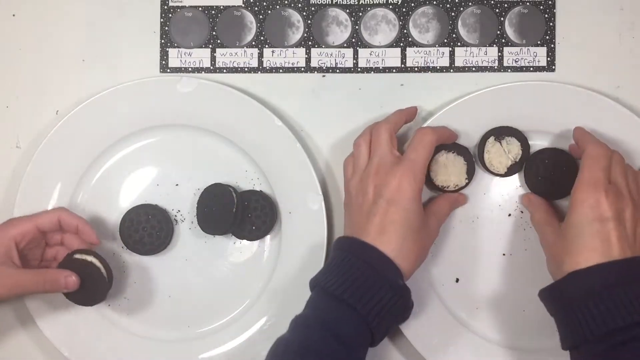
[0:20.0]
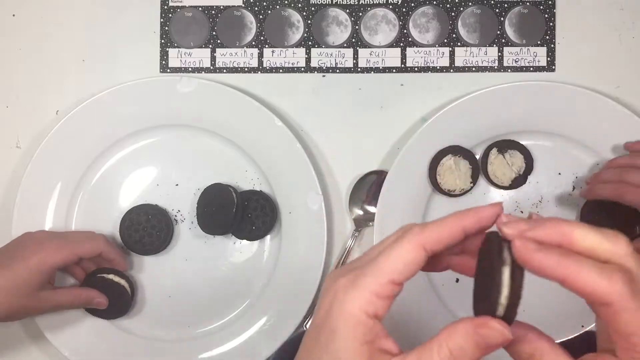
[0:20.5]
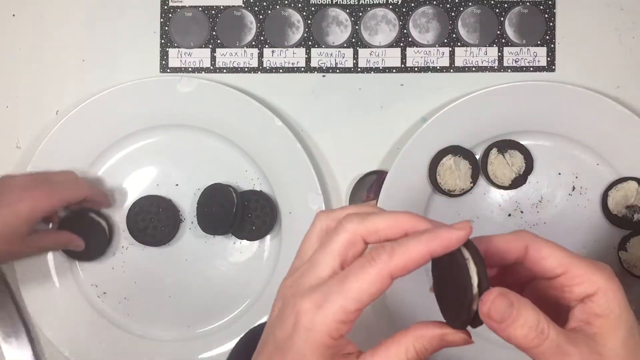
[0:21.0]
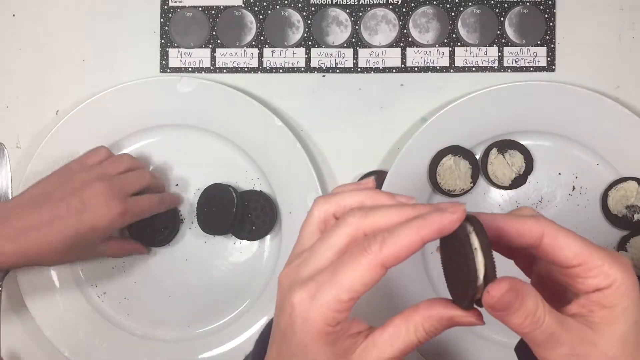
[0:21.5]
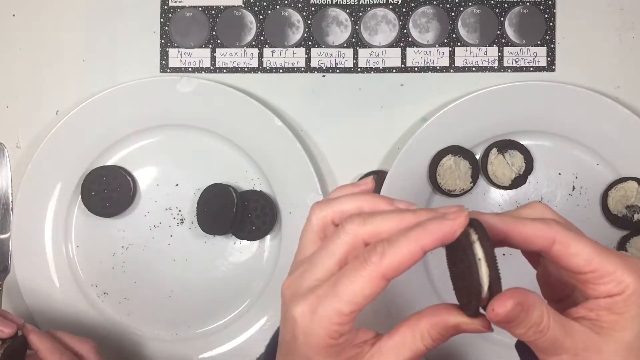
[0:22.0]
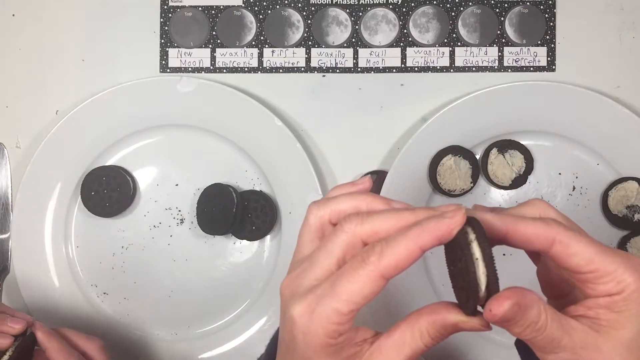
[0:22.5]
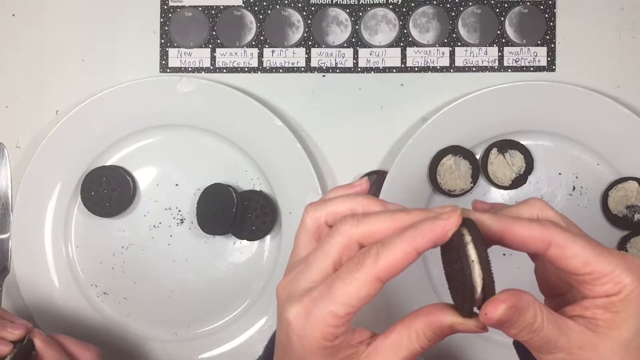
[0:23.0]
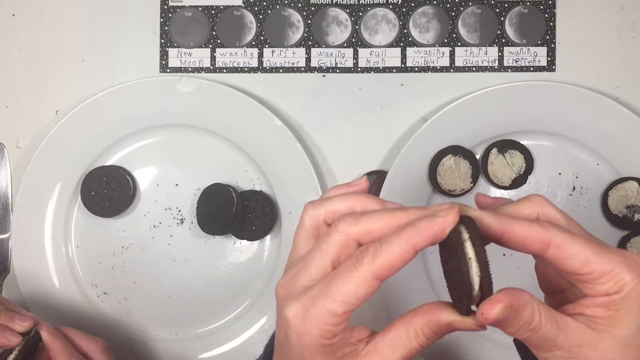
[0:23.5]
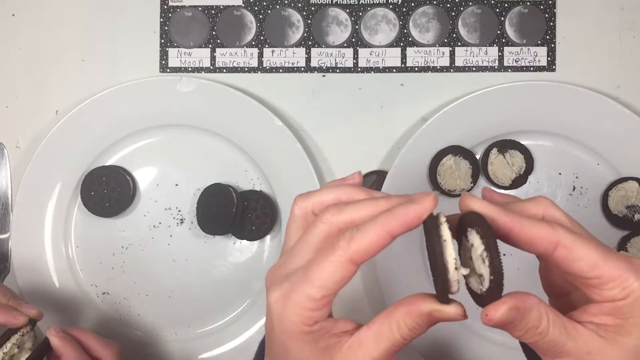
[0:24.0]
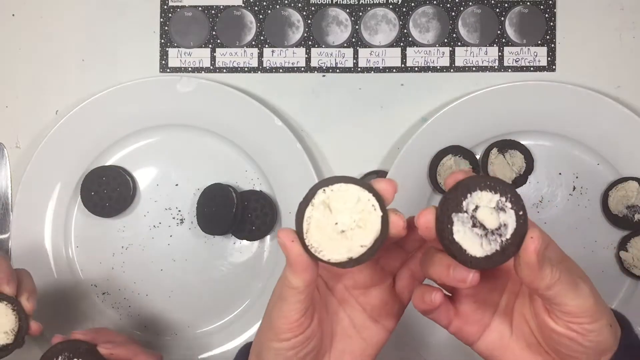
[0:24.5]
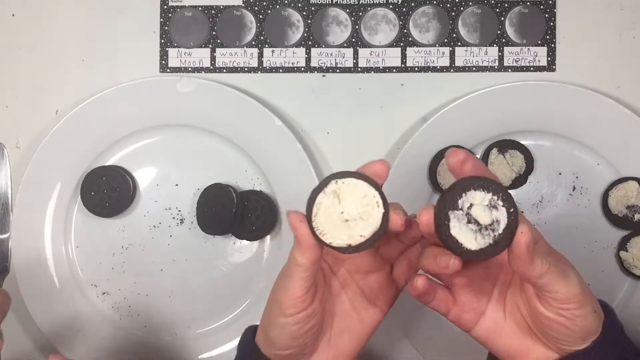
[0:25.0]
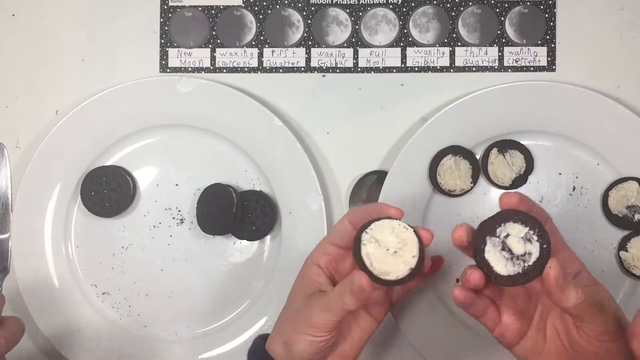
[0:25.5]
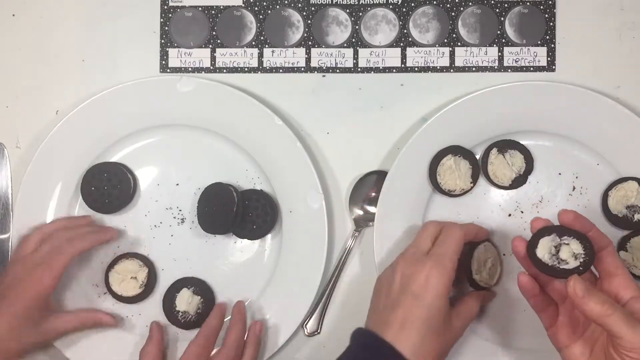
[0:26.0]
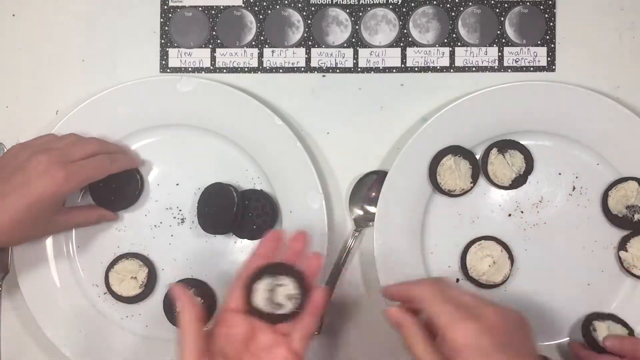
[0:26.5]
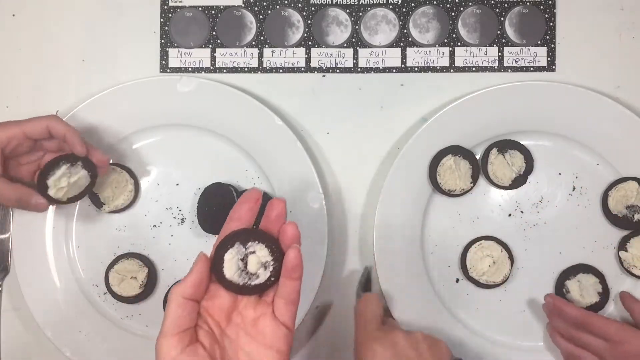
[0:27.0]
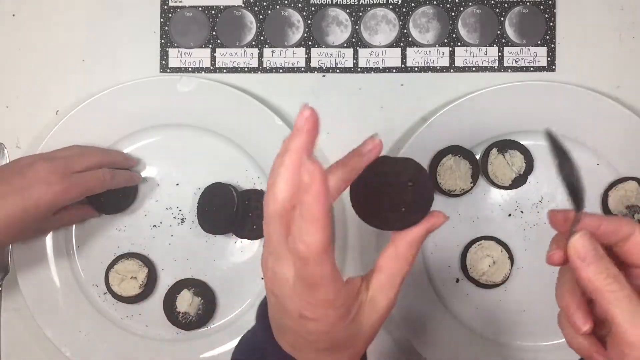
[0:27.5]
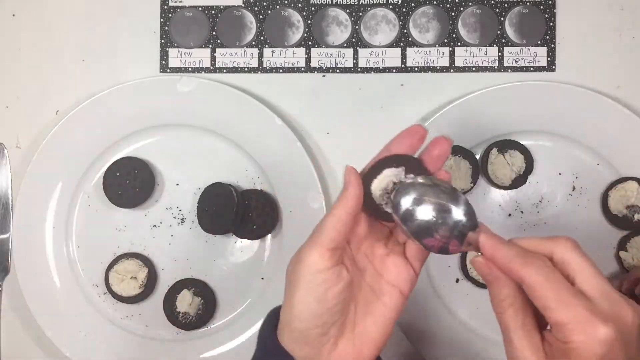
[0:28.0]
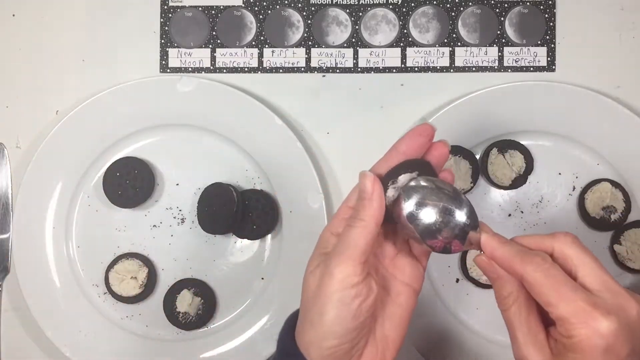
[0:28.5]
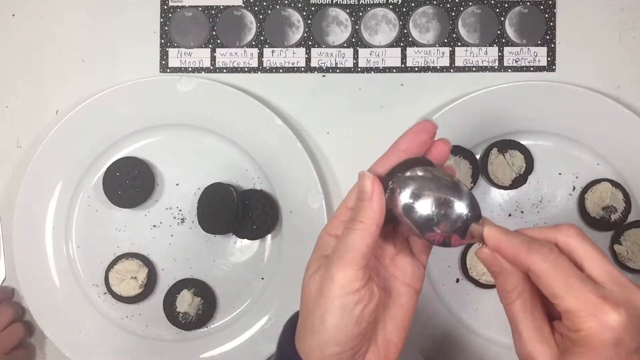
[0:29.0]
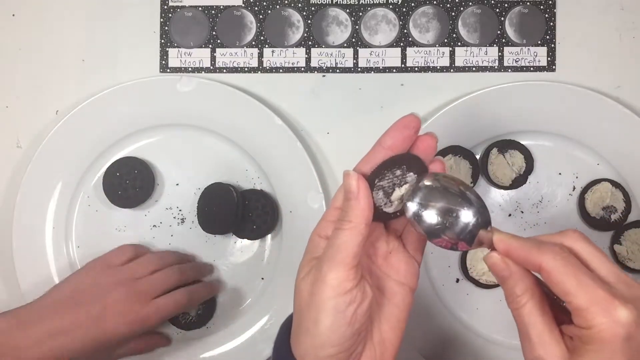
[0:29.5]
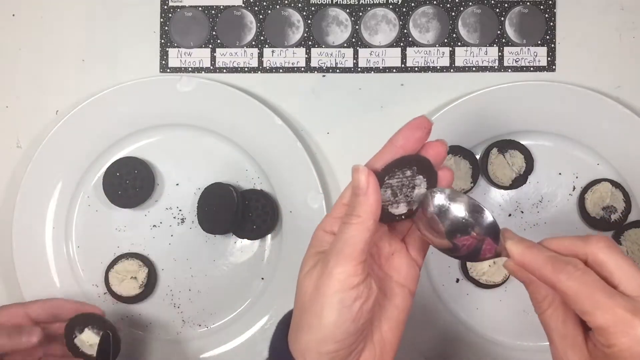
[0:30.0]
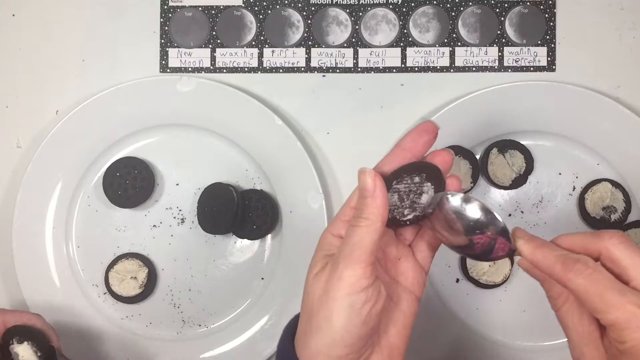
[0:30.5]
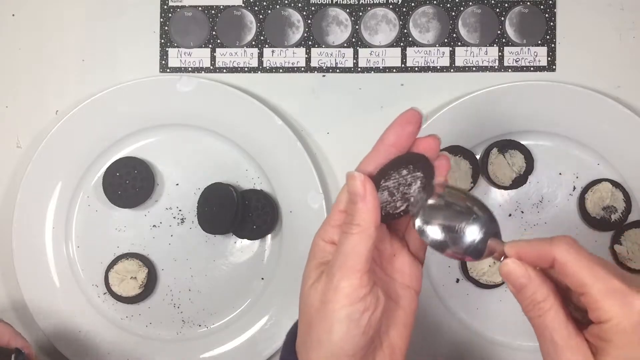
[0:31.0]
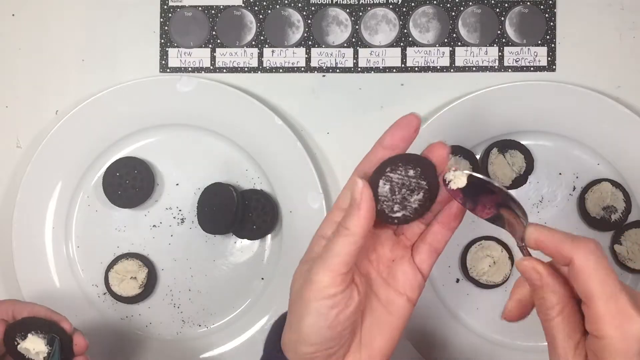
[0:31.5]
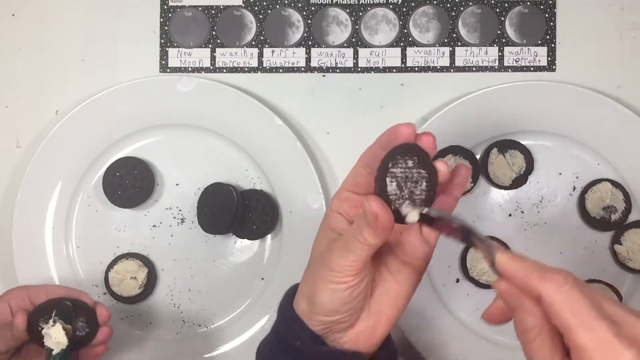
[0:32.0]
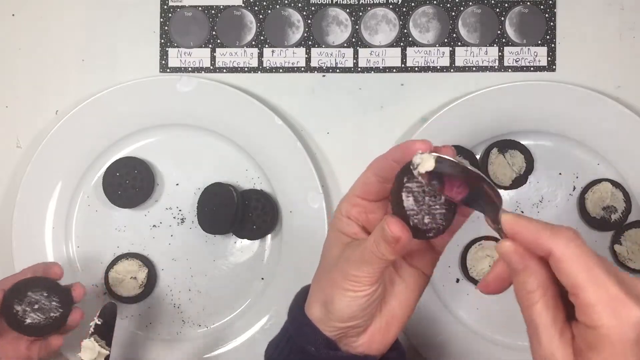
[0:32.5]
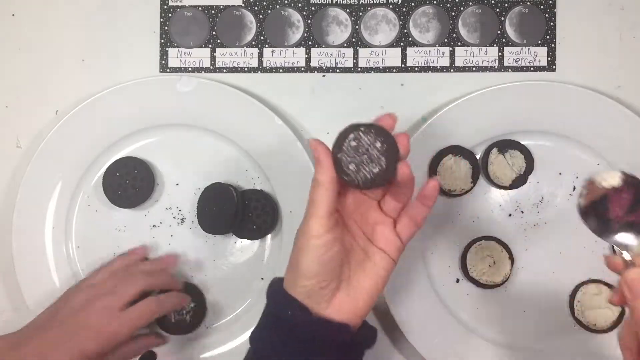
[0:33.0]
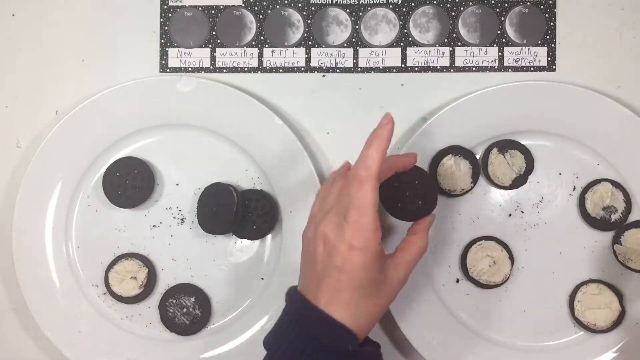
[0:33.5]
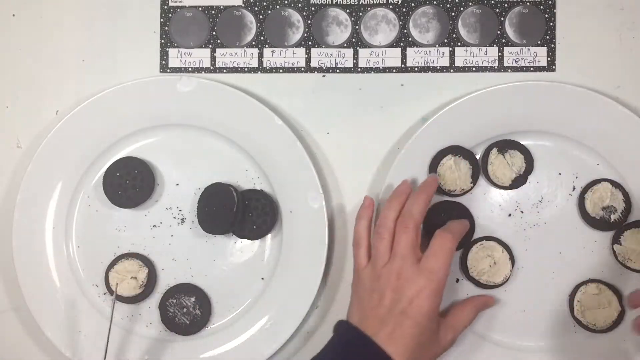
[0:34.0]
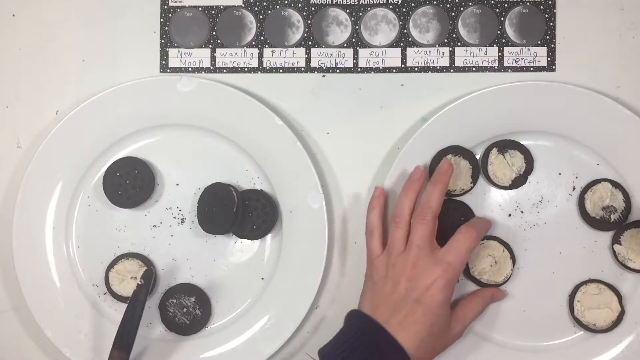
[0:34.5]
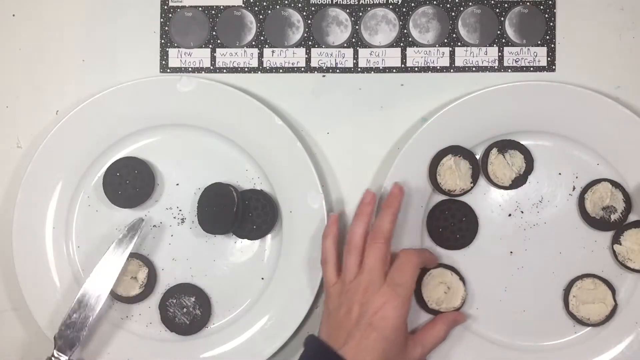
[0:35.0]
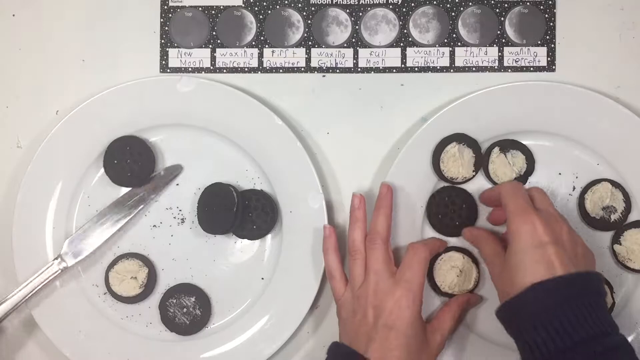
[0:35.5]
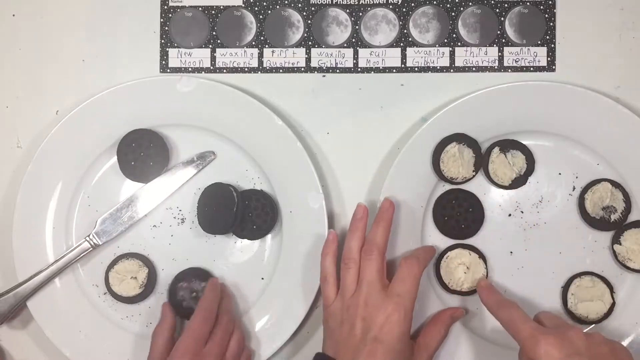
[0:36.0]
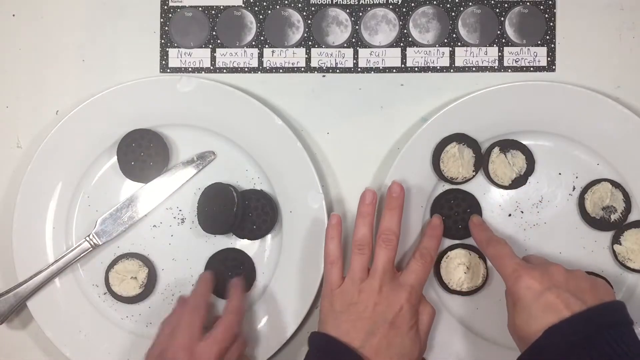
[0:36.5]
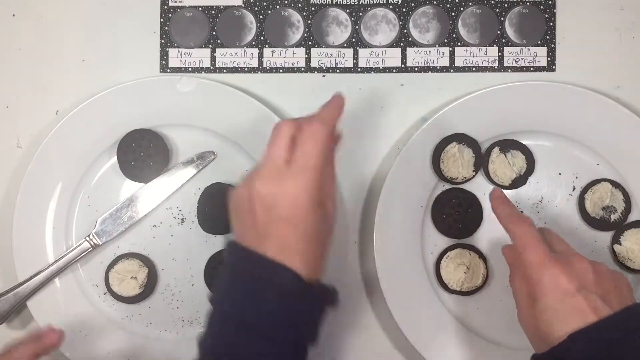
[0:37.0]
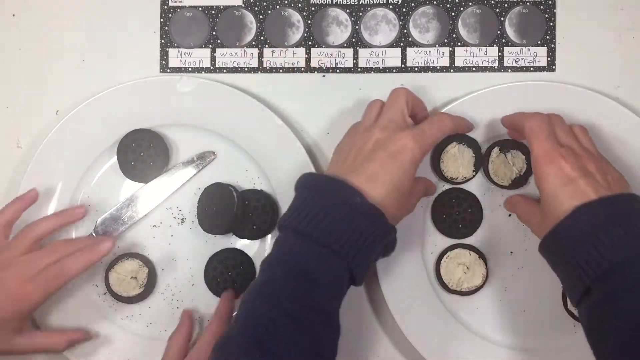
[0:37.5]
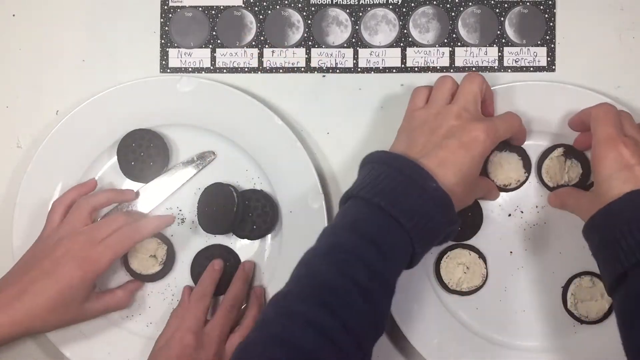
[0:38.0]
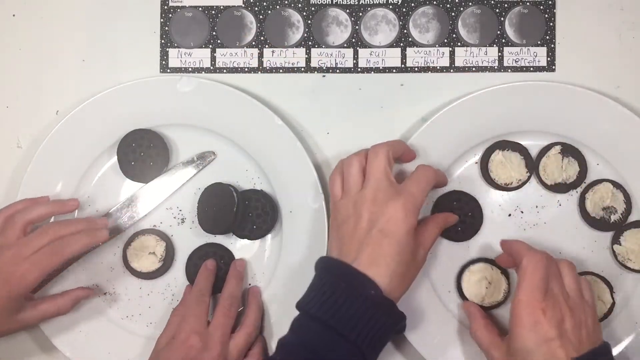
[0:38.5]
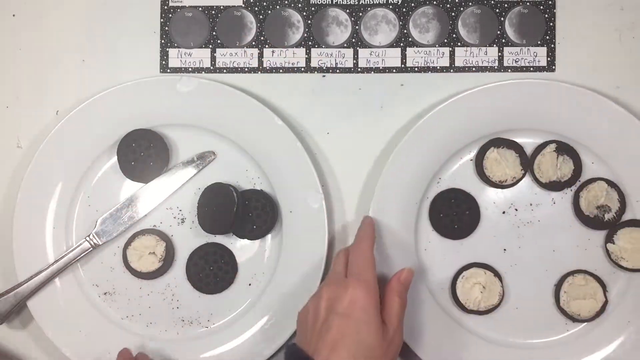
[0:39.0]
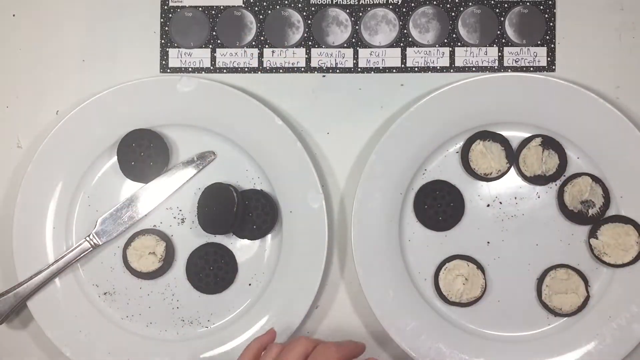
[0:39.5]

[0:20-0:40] The cookies continue to be opened and spread out on the white plates. A couple or maybe a few sets of hands twist the chocolate sandwich cookies open, exposing the filling inside, and place the halves on a plate. A person reaches in with their right hand while holding one of the cookie tops in their left hand and uses a stainless steel spoon to scrape at the frosting. Once the frosting is completely scraped off, they turn that cookie over, and the other halved cookies are displayed next to it, frosting side up. The cookies may be intended to simulate the cycles of the moon, as the small chart of moon phases with some handwriting on it is visible at the top of the screen.